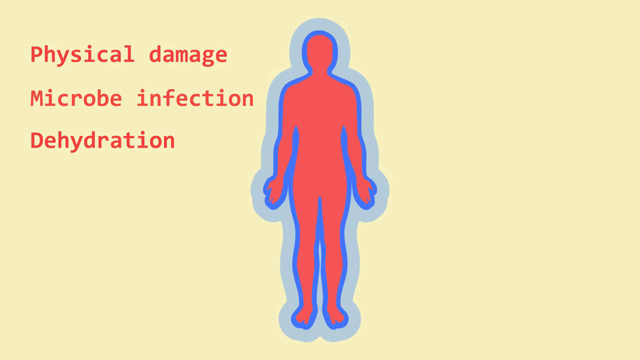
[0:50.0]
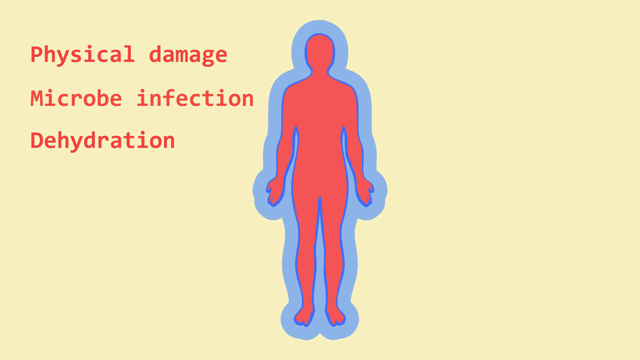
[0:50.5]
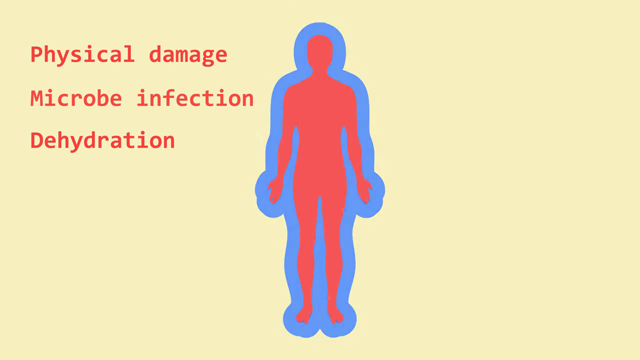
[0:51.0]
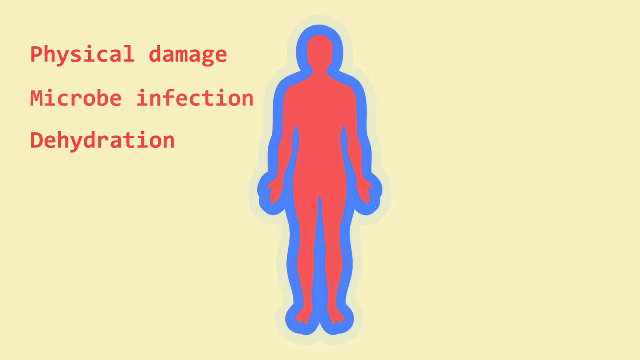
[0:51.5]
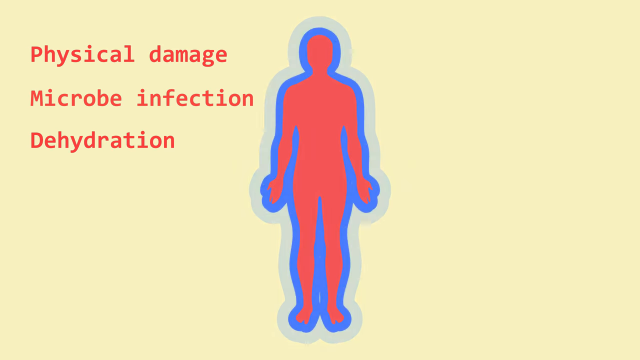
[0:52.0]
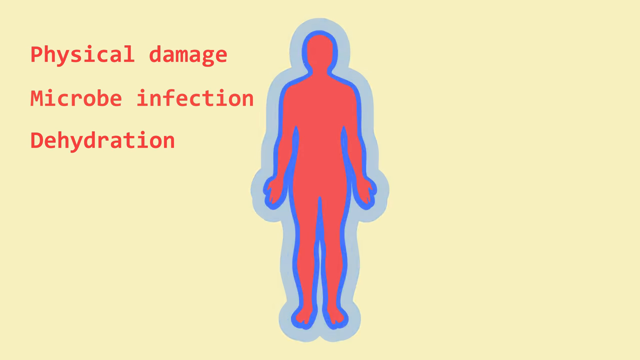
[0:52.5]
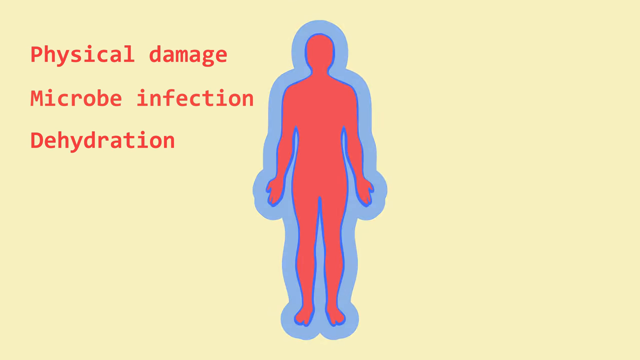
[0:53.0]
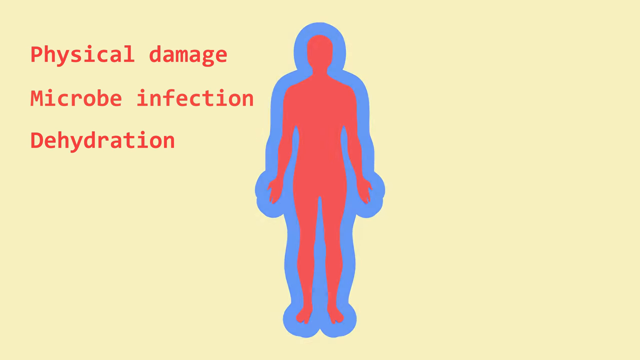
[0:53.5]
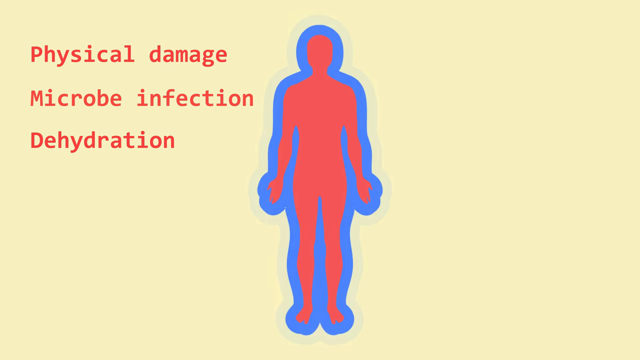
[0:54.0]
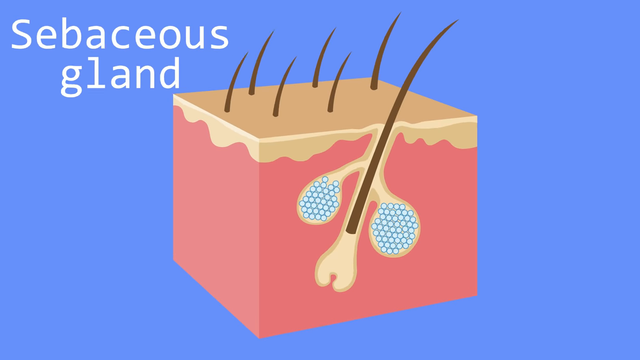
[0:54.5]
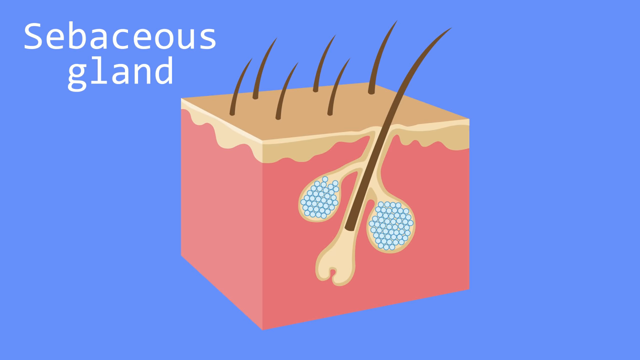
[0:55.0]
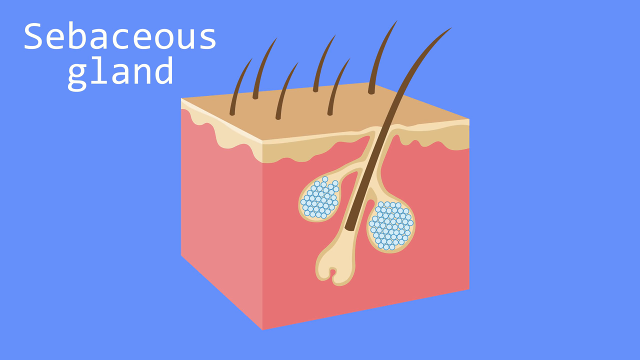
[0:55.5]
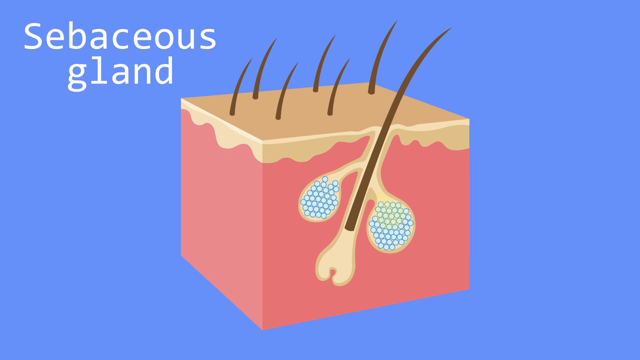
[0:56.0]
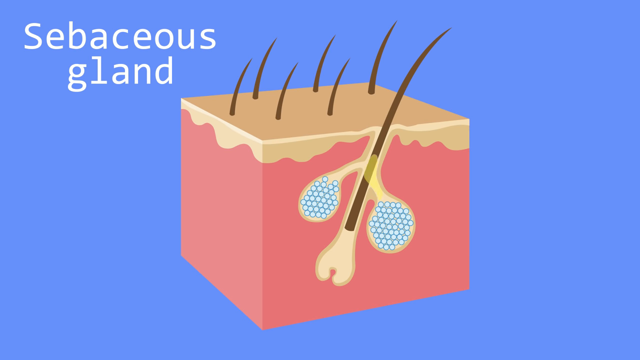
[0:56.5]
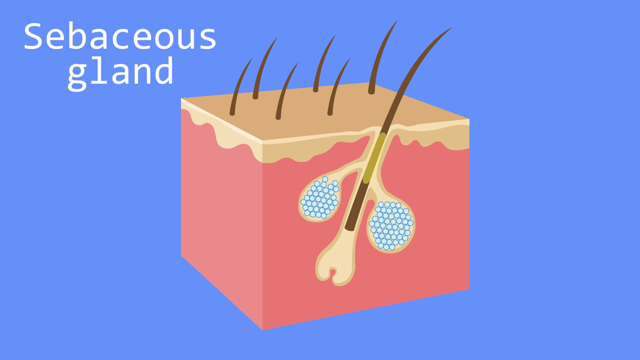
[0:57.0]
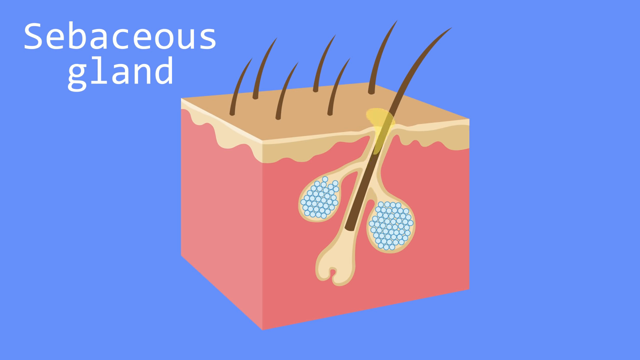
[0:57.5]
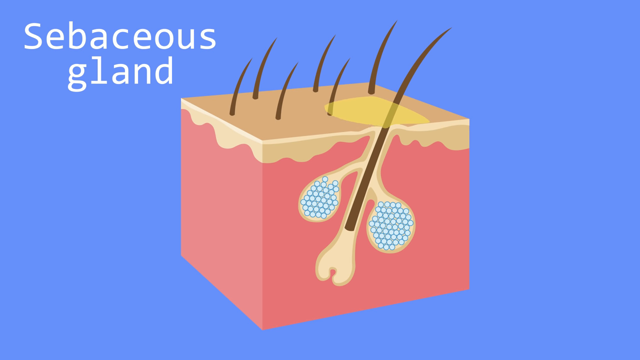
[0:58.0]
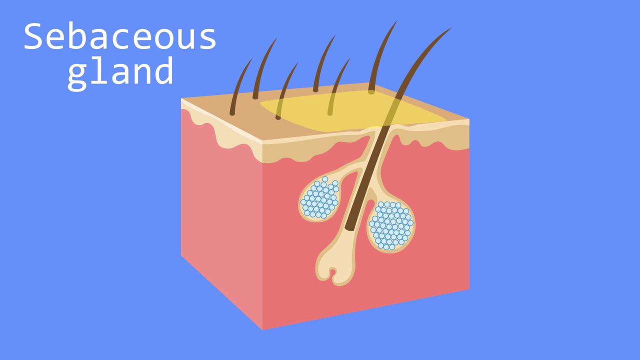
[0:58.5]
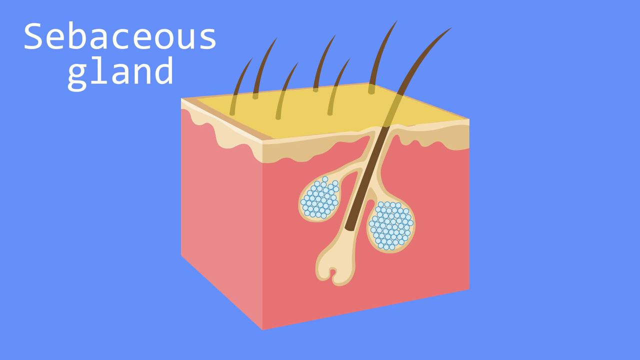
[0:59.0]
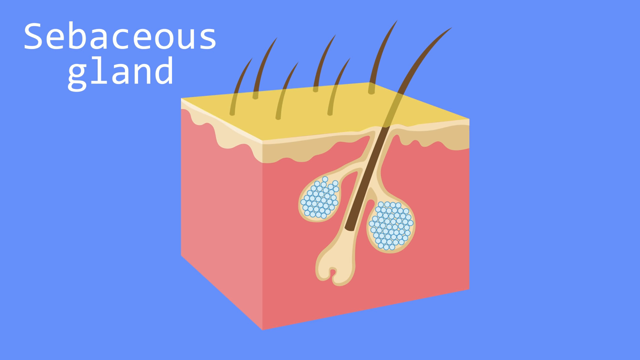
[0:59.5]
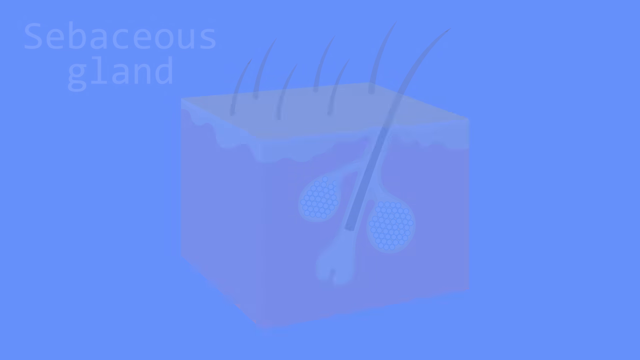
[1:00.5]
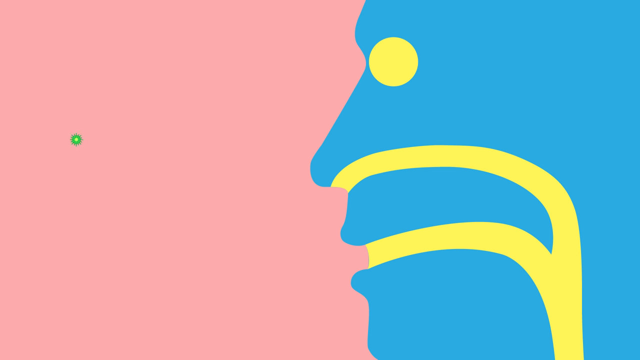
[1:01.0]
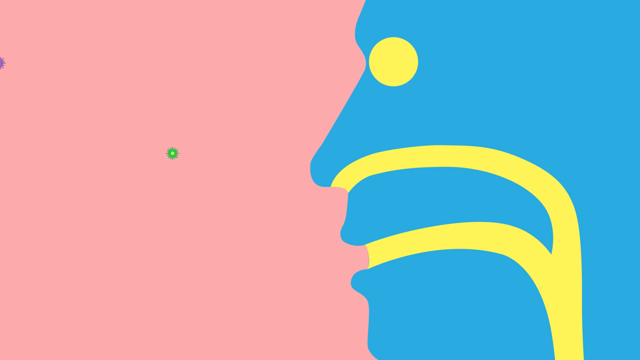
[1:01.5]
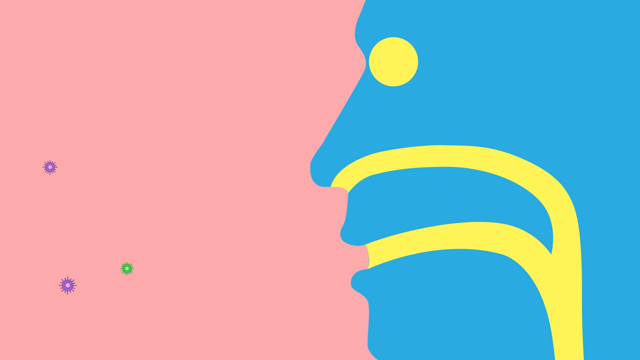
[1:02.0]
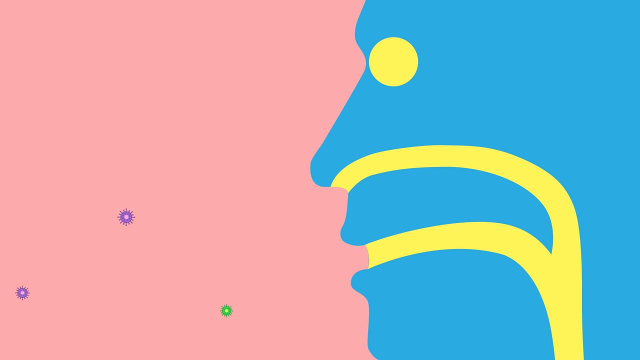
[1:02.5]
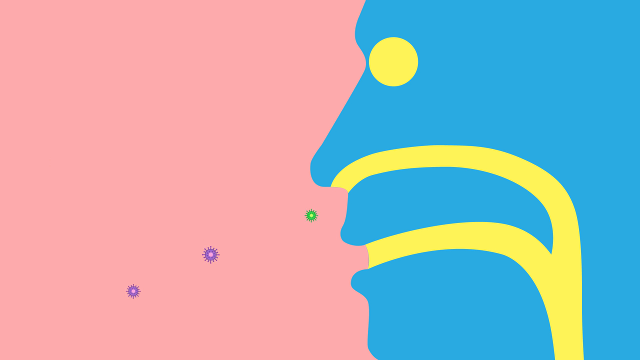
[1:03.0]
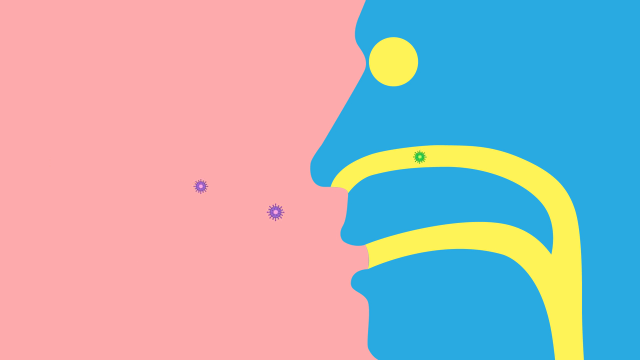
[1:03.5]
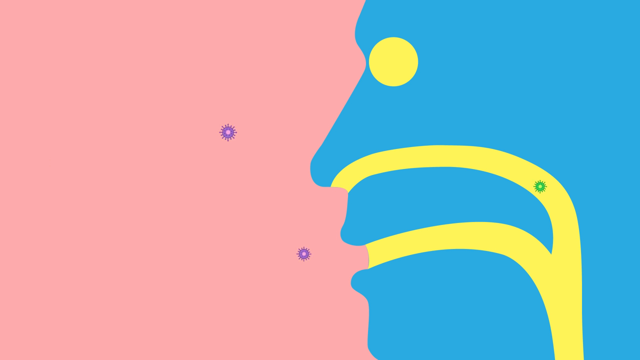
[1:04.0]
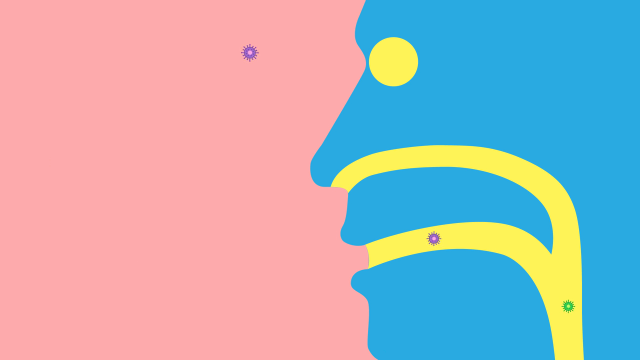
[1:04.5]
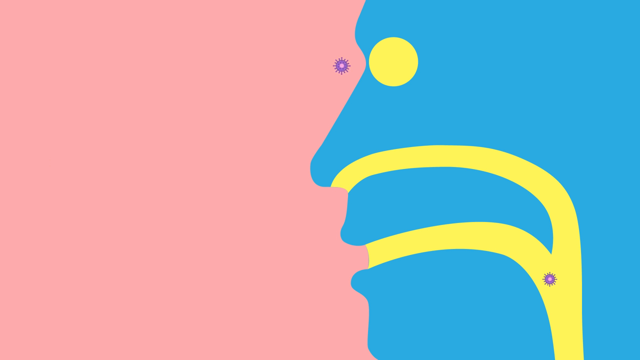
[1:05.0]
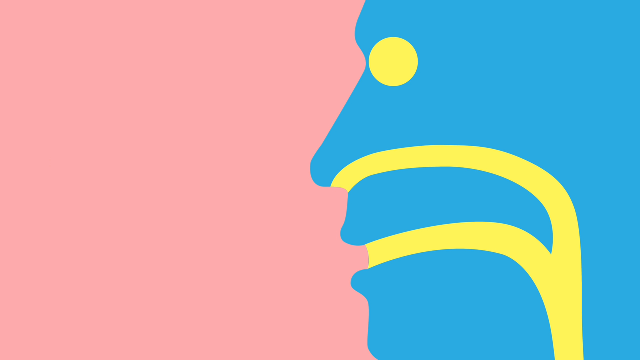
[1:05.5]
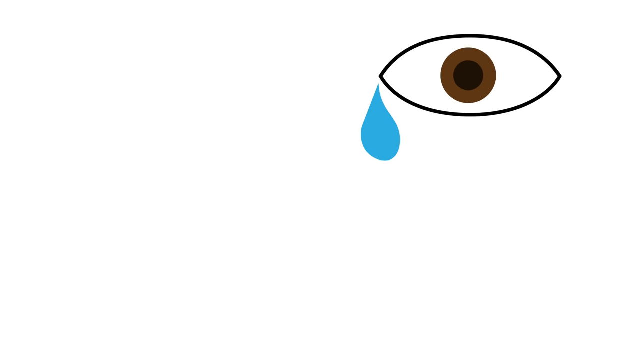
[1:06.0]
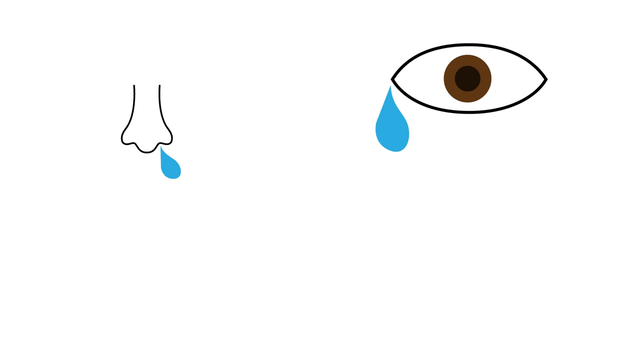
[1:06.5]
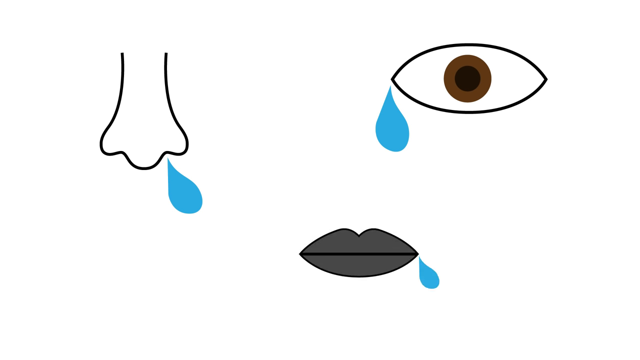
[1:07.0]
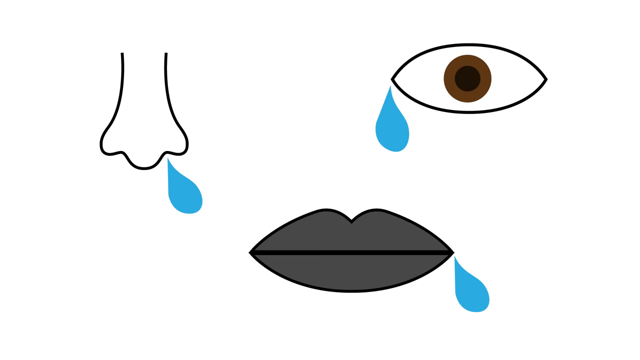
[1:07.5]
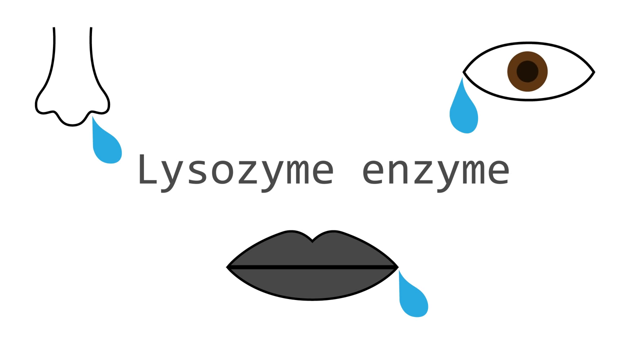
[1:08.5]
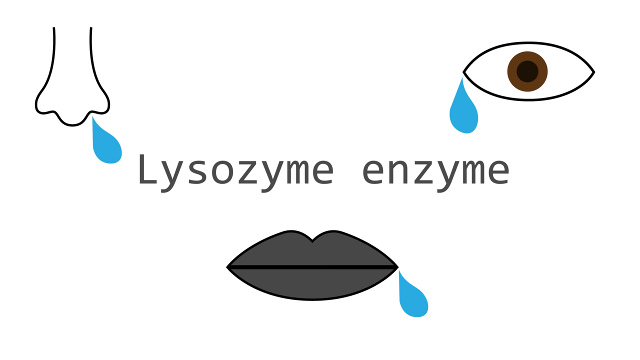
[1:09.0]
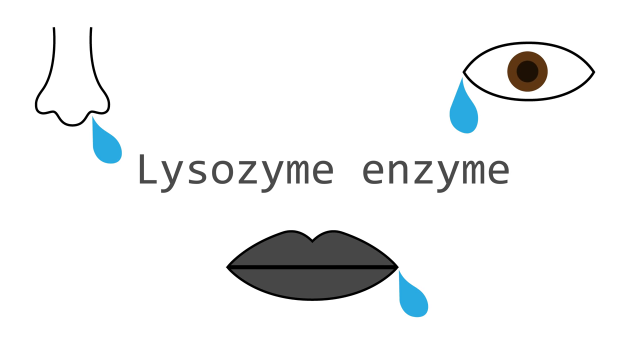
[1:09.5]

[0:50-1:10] The body is shown with additional colors added to it: a strong blue trace and a weak blue trace that keep blinking. A gland is shown, followed by a square object. Viruses enter through the nose, the mouth and the eyes, and an eye is crying. The words "lysosome enzyme" appear on screen.